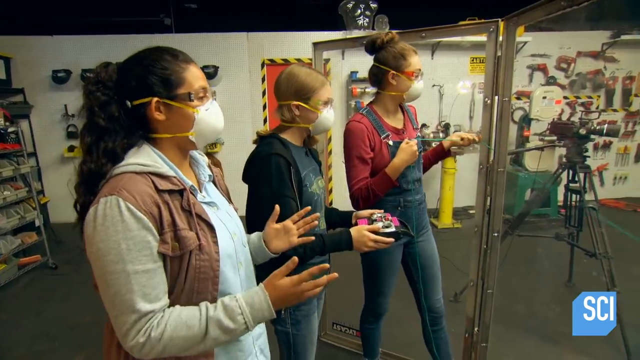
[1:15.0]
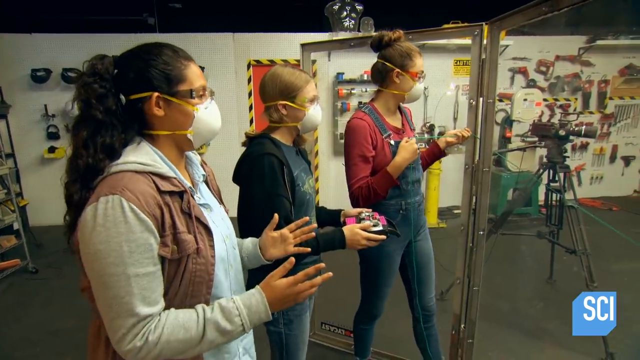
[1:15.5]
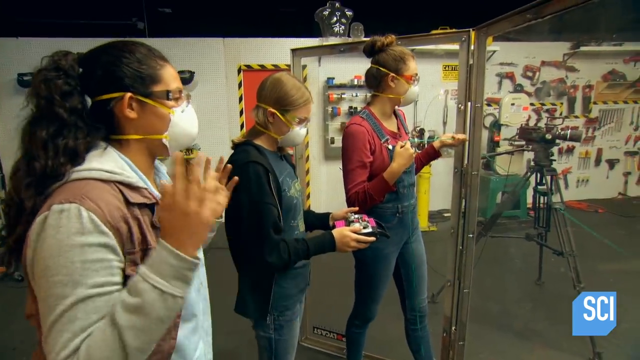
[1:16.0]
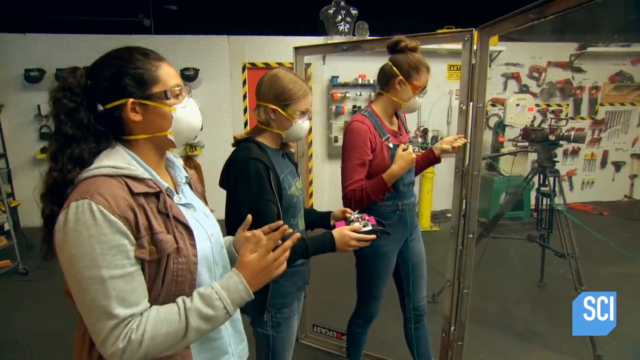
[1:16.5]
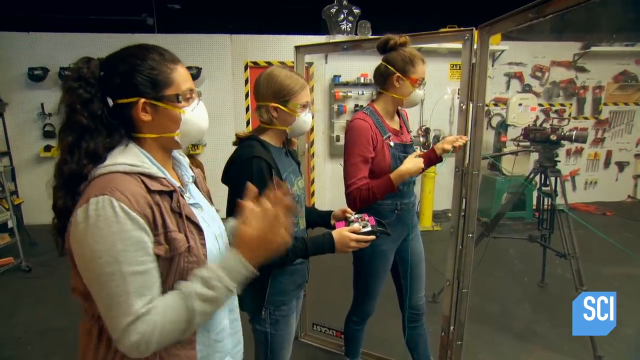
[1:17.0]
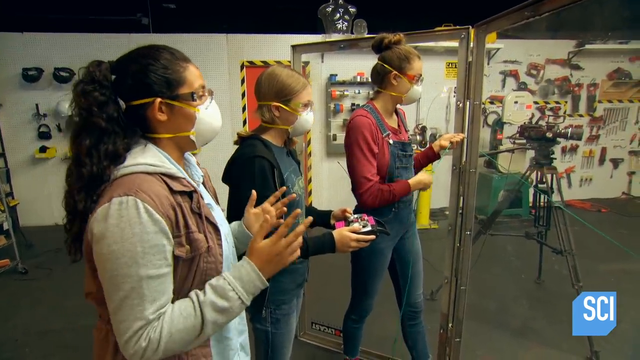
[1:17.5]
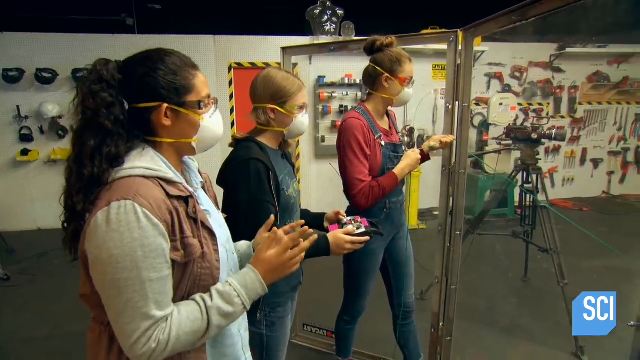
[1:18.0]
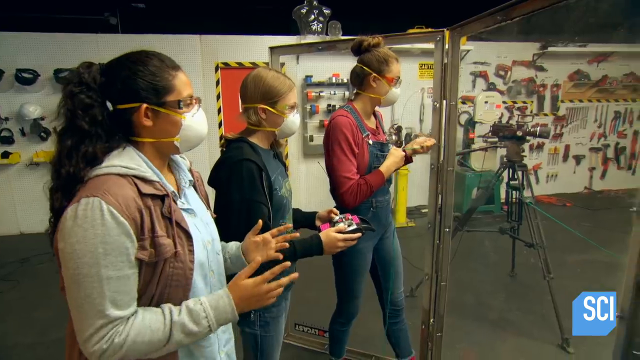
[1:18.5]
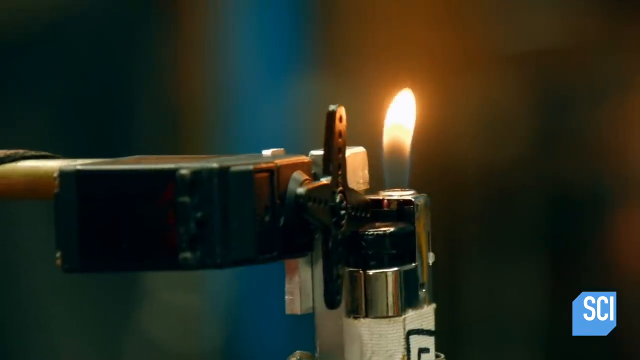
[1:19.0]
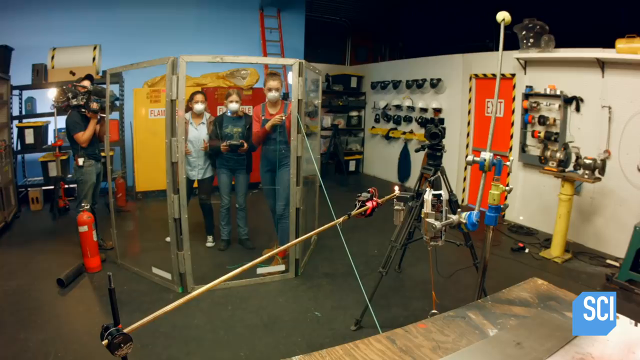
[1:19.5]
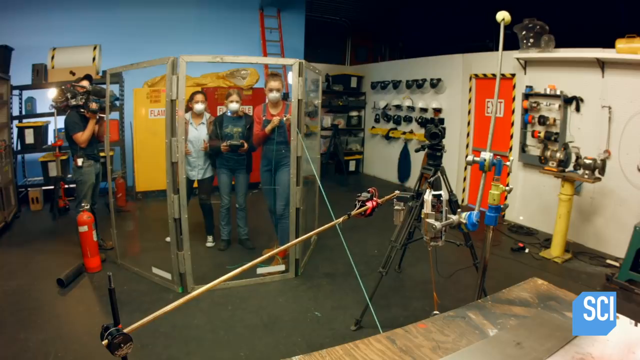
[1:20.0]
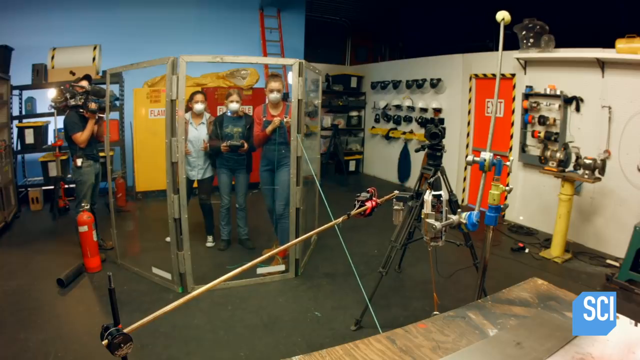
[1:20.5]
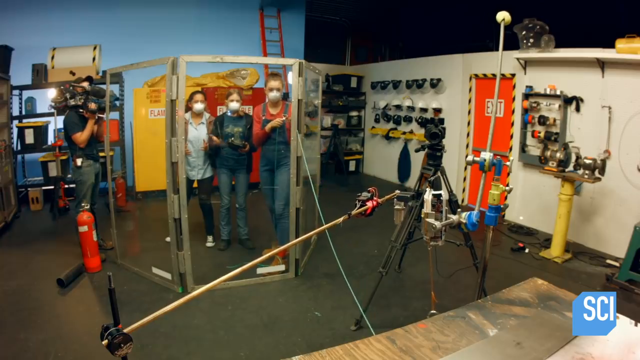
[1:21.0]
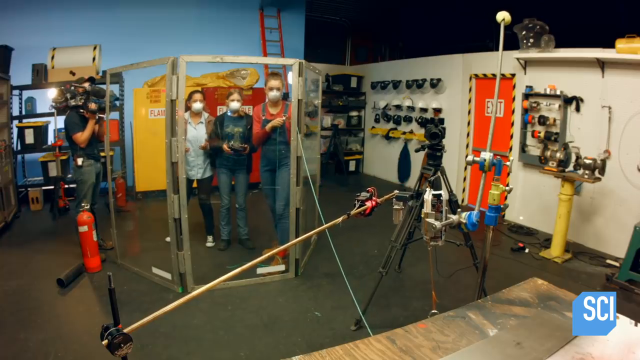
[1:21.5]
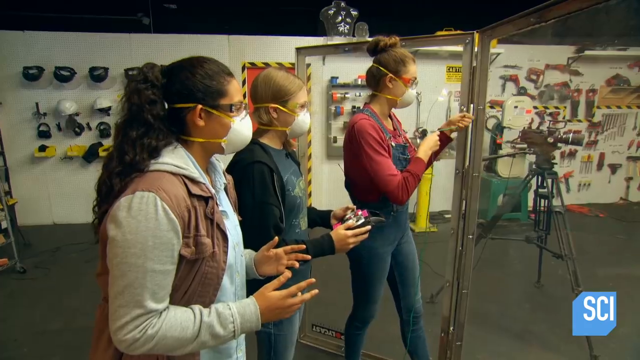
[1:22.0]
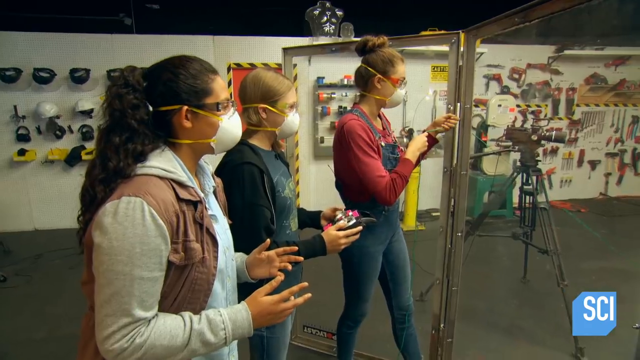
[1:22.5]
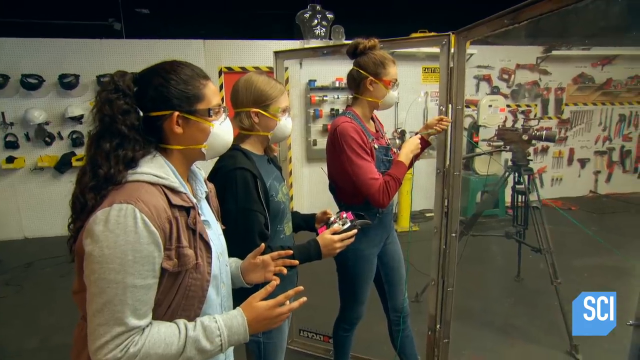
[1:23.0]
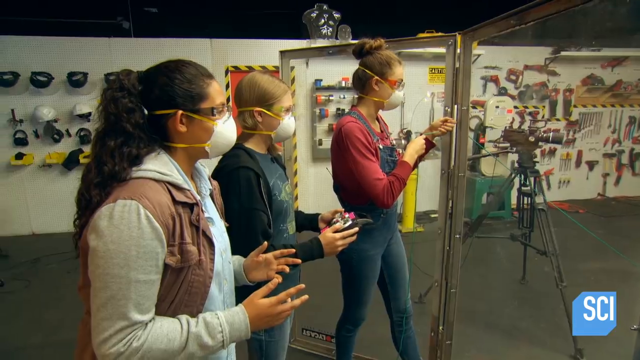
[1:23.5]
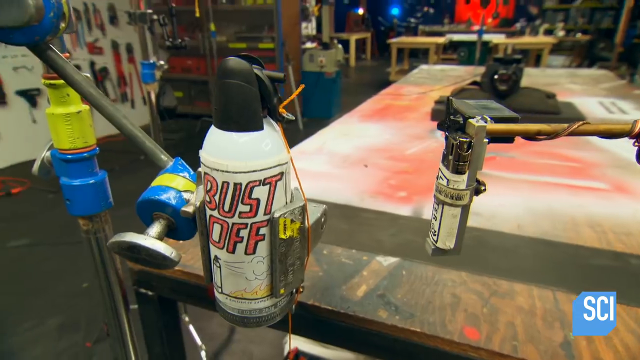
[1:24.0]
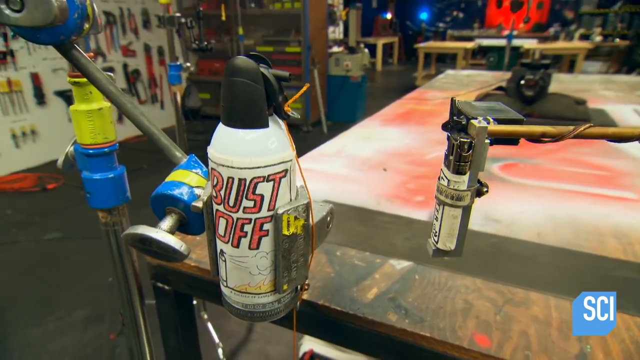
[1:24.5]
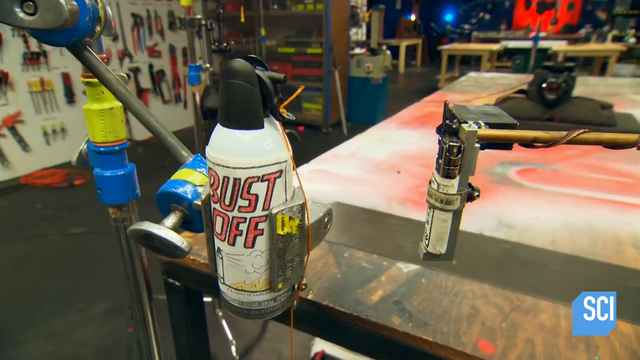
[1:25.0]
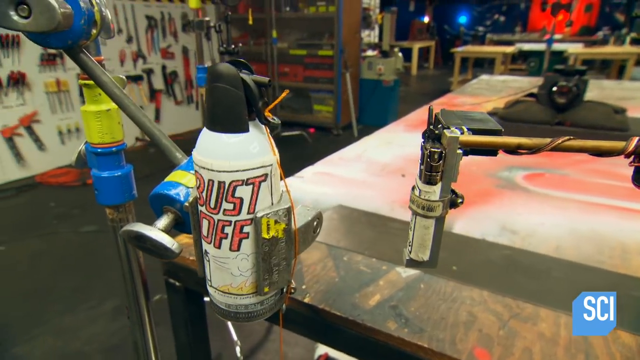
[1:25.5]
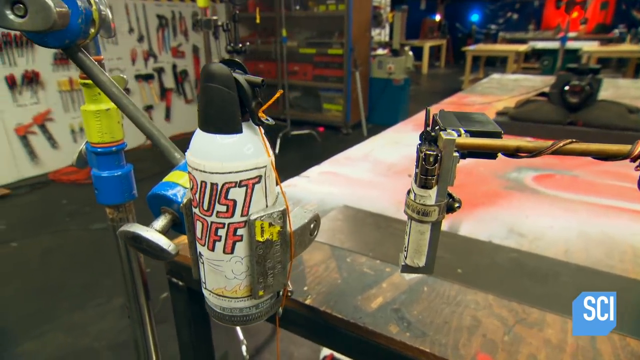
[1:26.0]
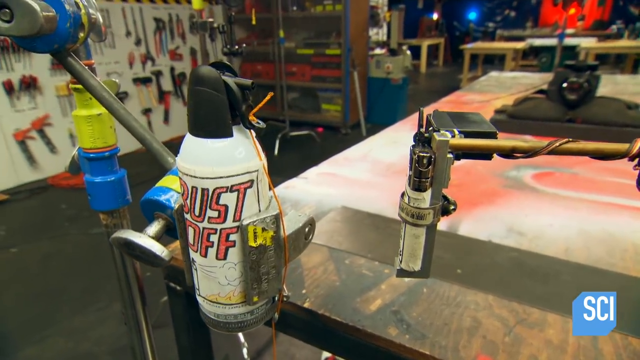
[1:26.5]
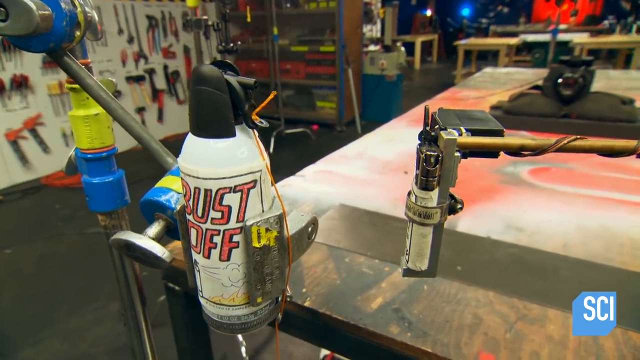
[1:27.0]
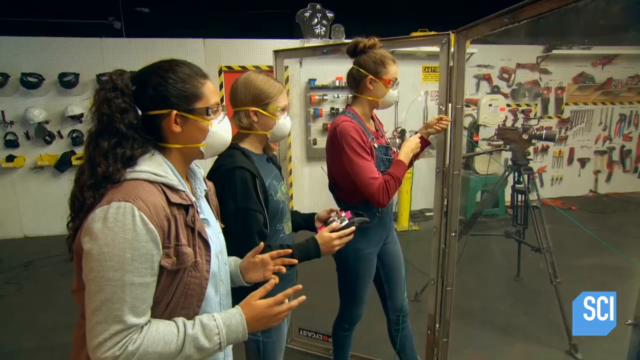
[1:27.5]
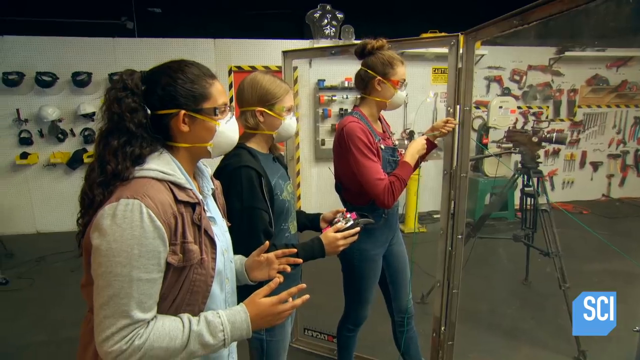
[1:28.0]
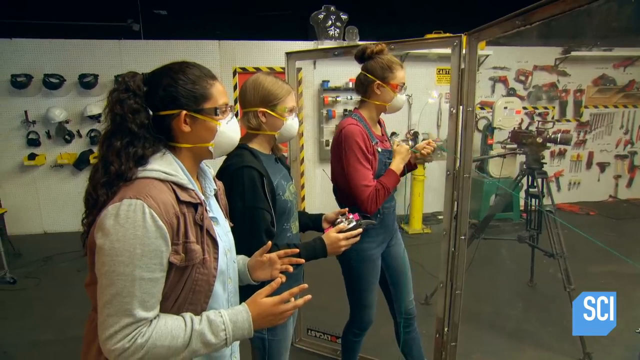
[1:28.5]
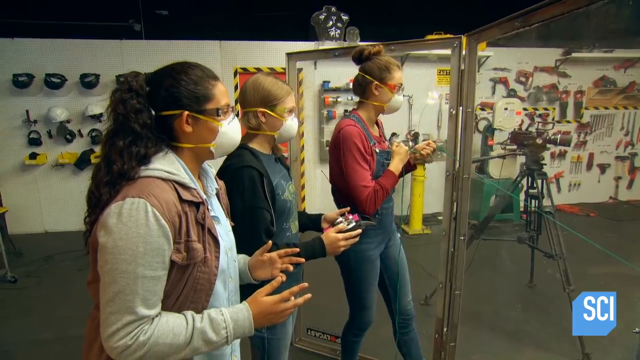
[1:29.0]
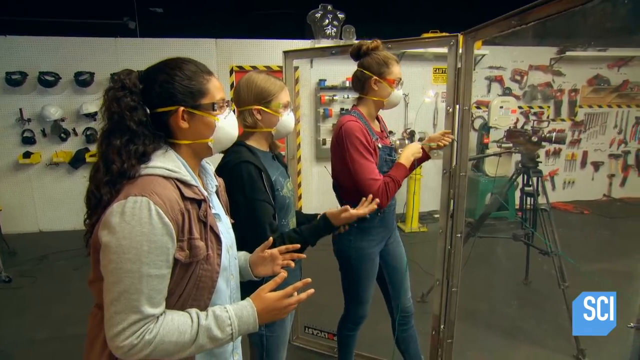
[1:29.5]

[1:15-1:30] The video, by Mythbusters, is about how flammable compressed air is. Three teenage girls are behind a glass screen, and in the middle of the scene is a bottle of Bust-Off. They hold a string meant to turn on a lighter to ignite the compressed air coming out of the Bust-Off. The girls wear safety gear: glasses and/or goggles and masks. One girl wears blue suspenders and a red long-sleeve shirt. The second girl, in the middle, wears blue jeans, a blue t-shirt and a black sweater. The third wears a blue jean shirt with a brown overall and jean pants. All wear closed-toe shoes.